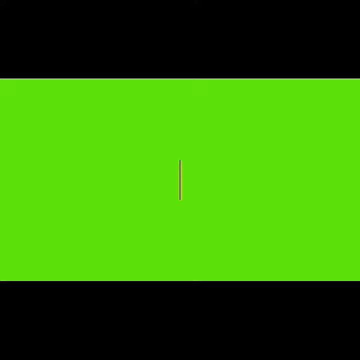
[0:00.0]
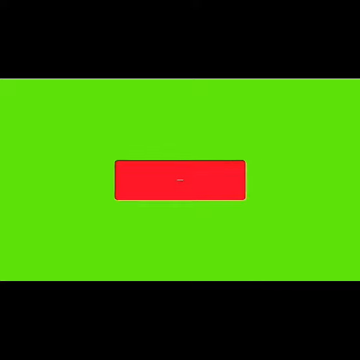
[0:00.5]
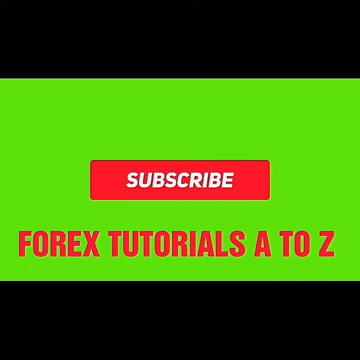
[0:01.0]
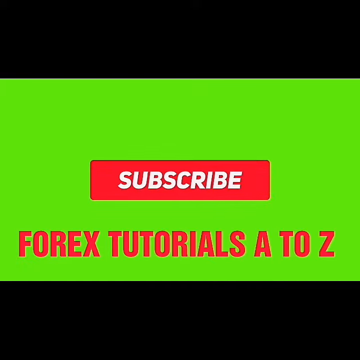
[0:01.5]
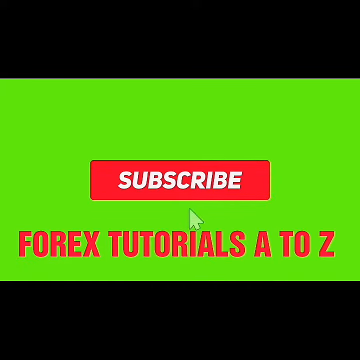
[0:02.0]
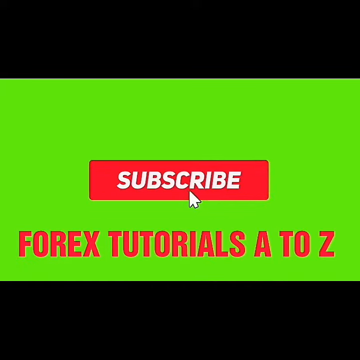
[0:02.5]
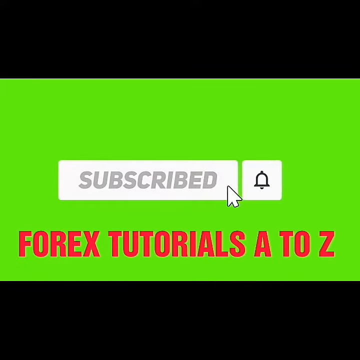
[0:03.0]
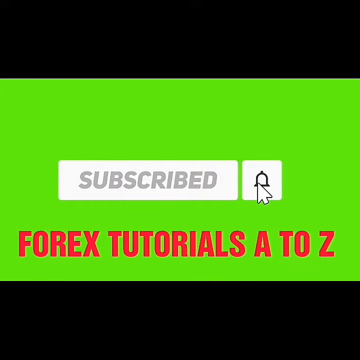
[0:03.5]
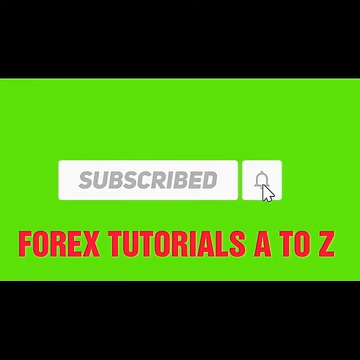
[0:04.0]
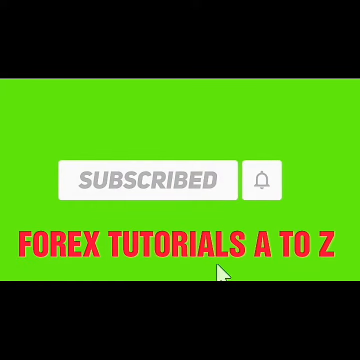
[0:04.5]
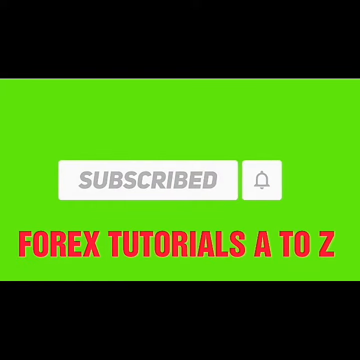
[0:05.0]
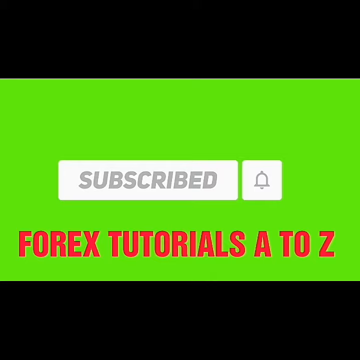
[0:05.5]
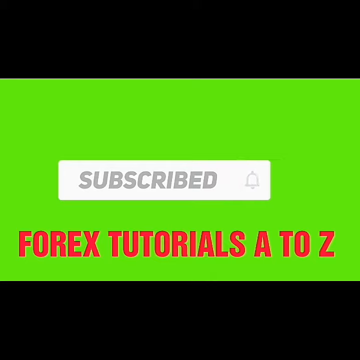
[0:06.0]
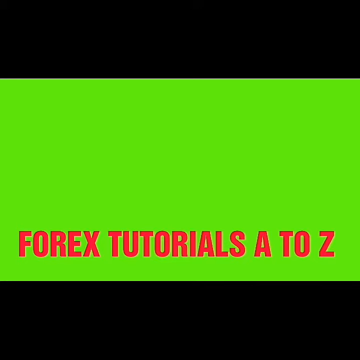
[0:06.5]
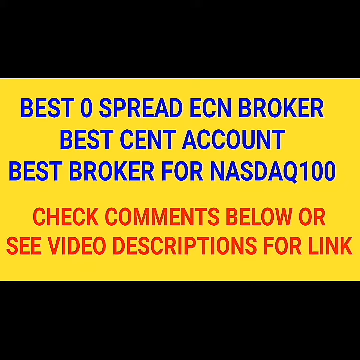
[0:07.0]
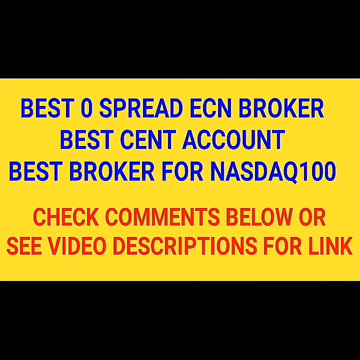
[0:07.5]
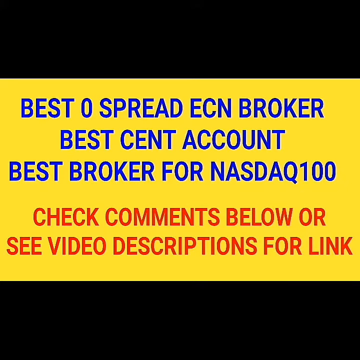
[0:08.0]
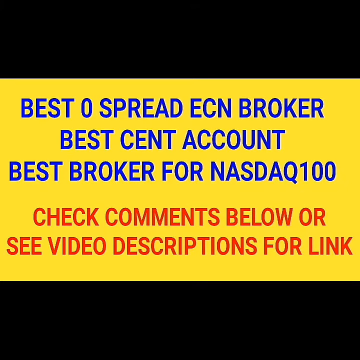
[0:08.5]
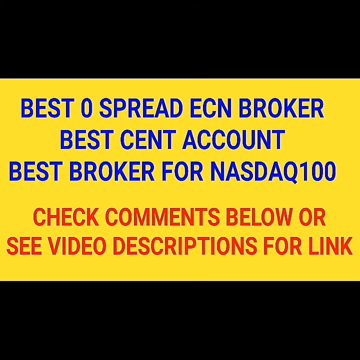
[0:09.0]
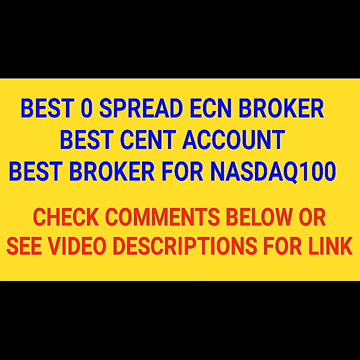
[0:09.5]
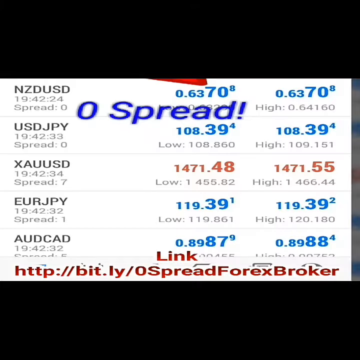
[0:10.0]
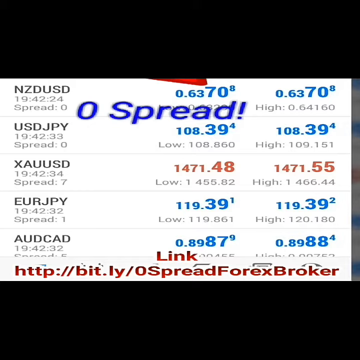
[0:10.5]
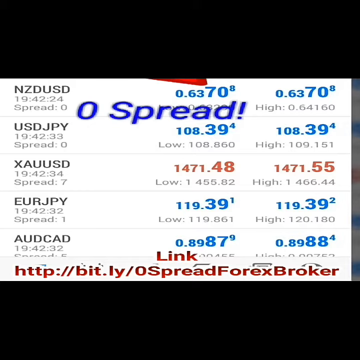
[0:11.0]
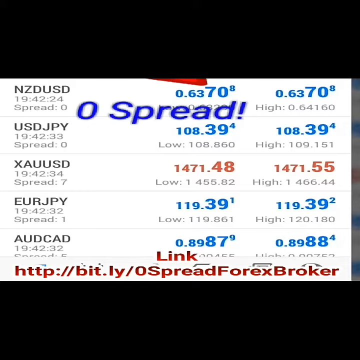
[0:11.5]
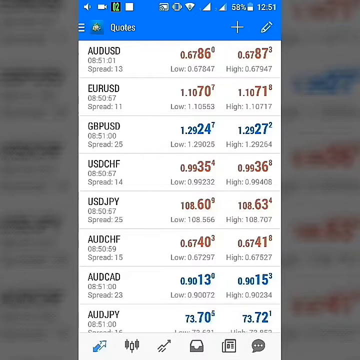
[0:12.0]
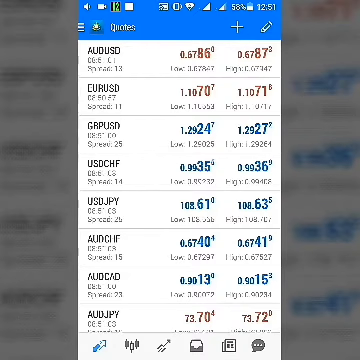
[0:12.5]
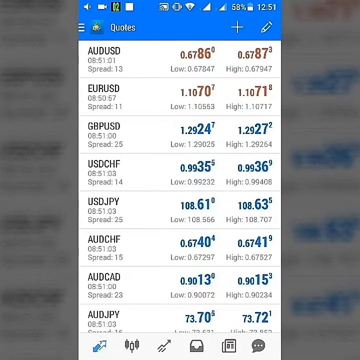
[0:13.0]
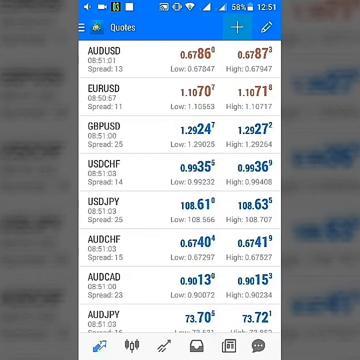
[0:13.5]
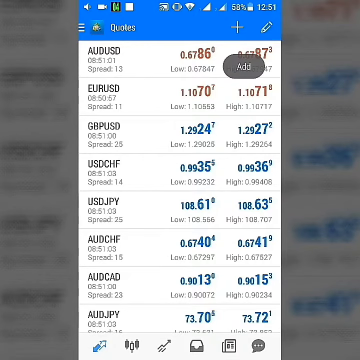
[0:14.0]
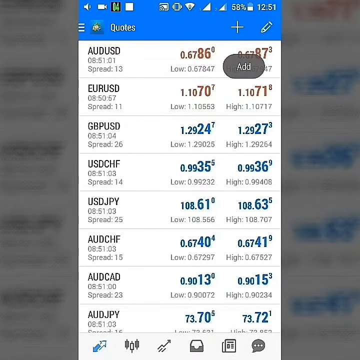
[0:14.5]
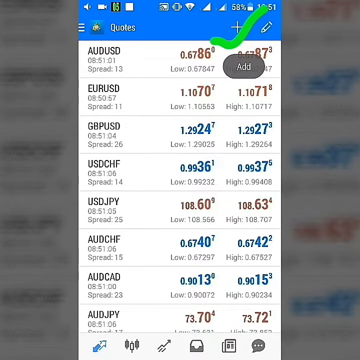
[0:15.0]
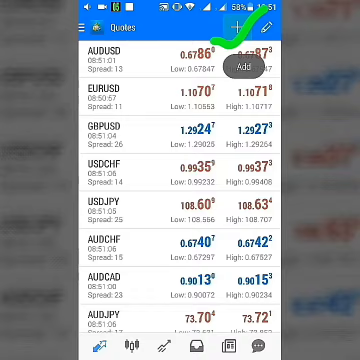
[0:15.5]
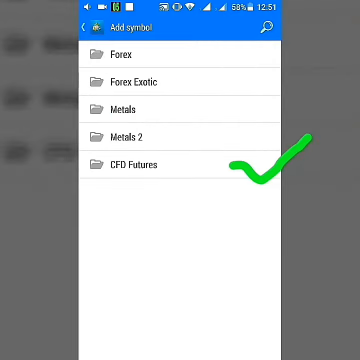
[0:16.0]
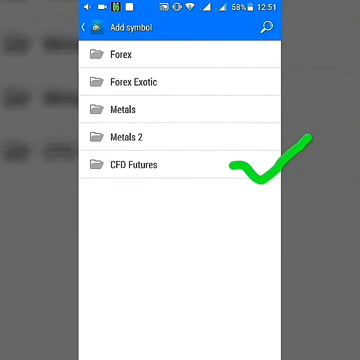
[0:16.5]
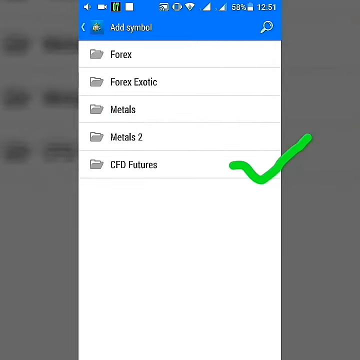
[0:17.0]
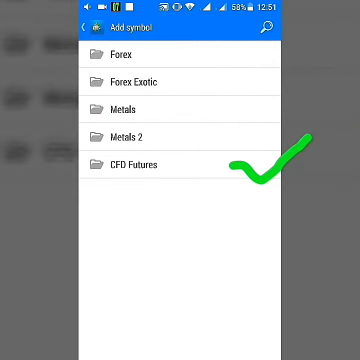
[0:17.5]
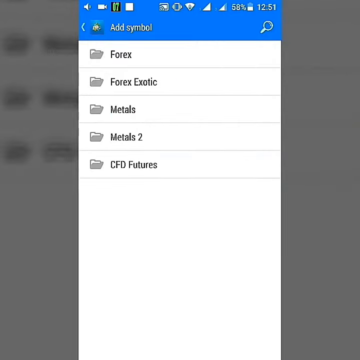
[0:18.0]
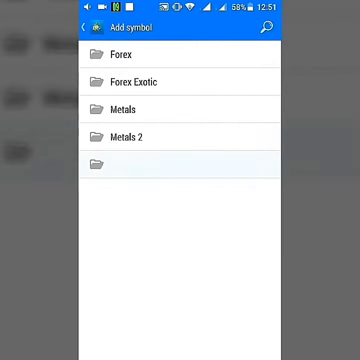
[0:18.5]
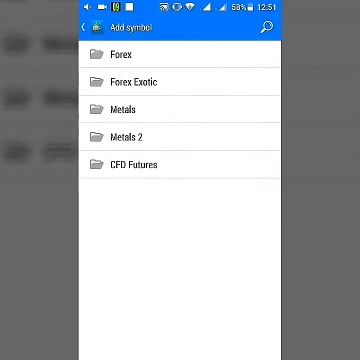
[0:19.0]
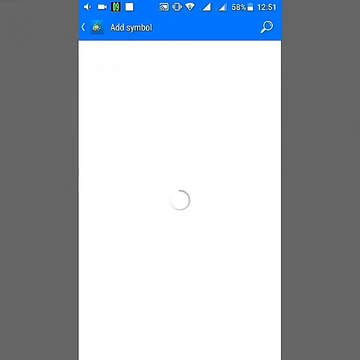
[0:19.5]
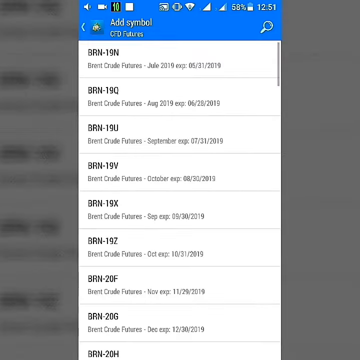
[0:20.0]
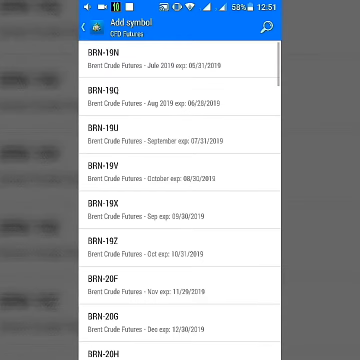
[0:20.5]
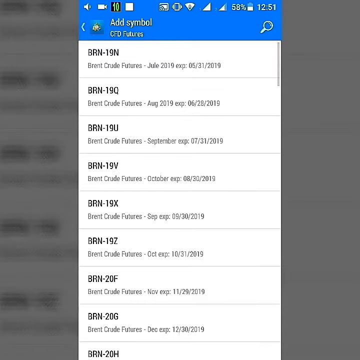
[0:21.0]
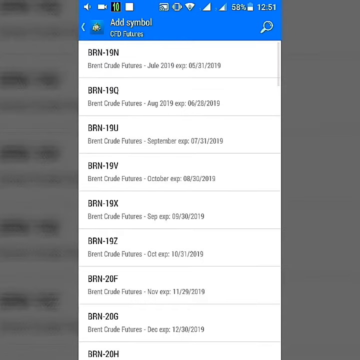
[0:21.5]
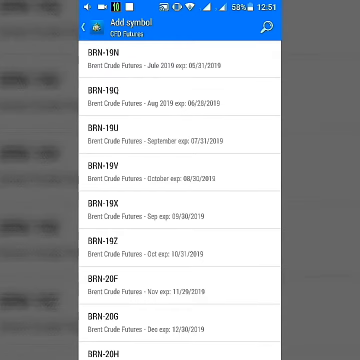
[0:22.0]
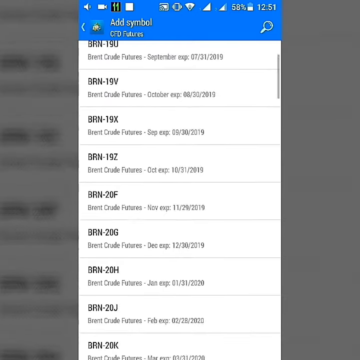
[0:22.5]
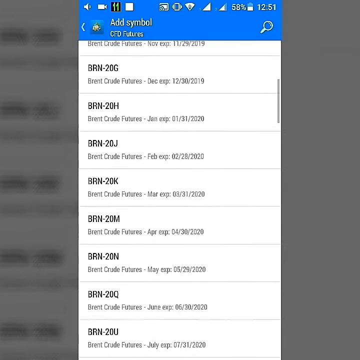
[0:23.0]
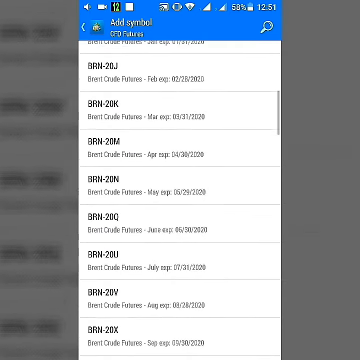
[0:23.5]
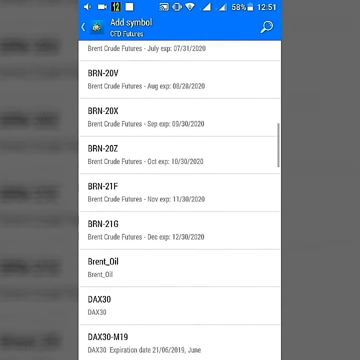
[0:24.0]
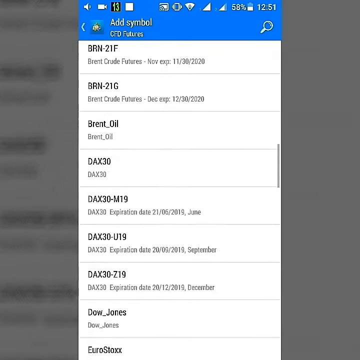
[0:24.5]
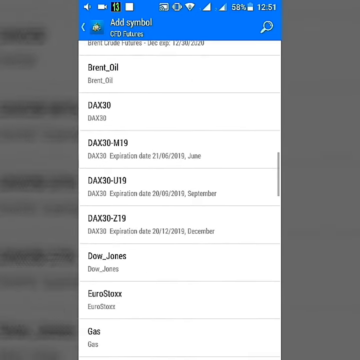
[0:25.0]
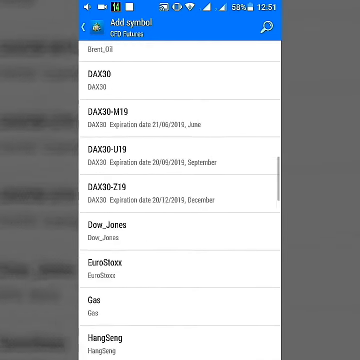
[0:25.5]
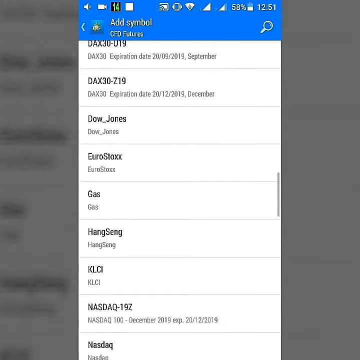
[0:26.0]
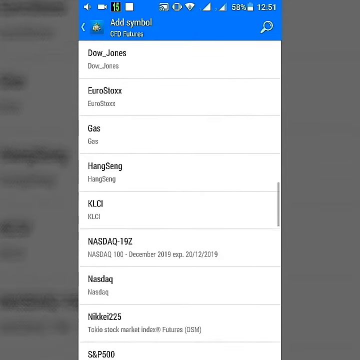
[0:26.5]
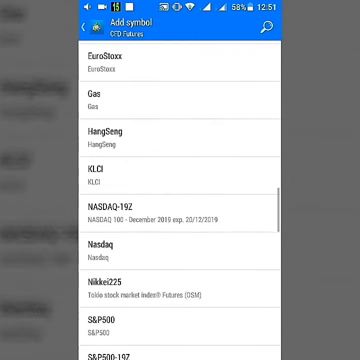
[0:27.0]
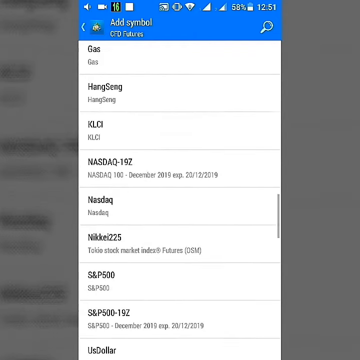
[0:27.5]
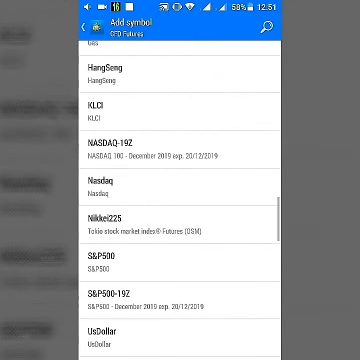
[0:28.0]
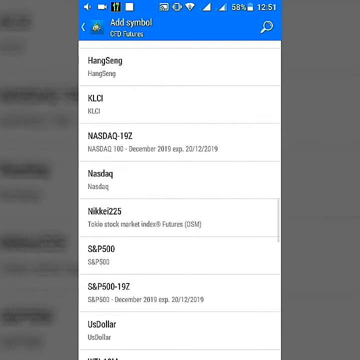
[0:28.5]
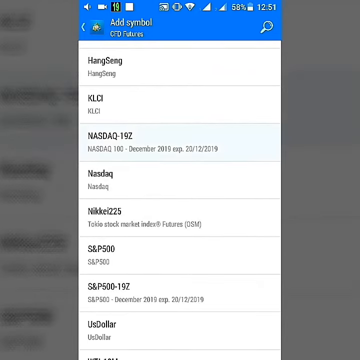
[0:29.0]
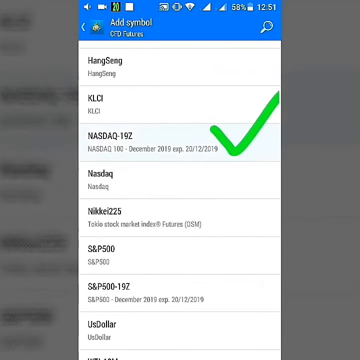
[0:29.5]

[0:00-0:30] An opening page with a green background shows "subscribe" on a banner in the center, along with "Forex Tutorials A to Z". A second page follows with a yellow background and blue and red text that reads "Best Zero Spread ECN Broker, Best Cent Account, Best Broker for NASDAQ Q100. Check comments below or see video descriptions for link." Next comes what looks like an iPhone or phone page with stock numbers: AUD USD with a low of .67847 and a high of 0.67947, and GBPUSD with a low of 1.29 and a high of 1.29. Another page opens, also looking like it comes from a cell phone or a tablet, judging by the shape of the page. It shows folders: Forex, Forex Exotic, Metals, Metals 2, and CFD Futures. A blue banner on top shows the battery at 58% and the time as 12.51.